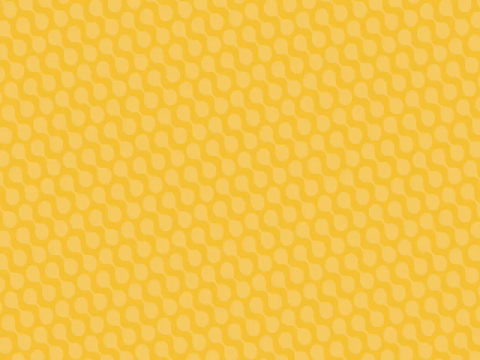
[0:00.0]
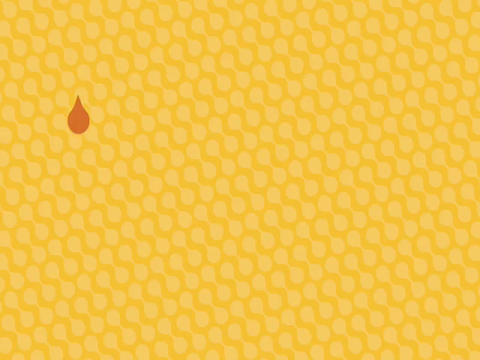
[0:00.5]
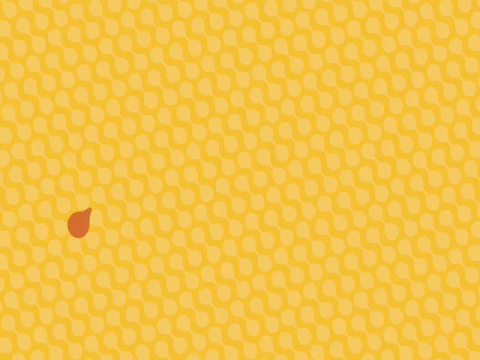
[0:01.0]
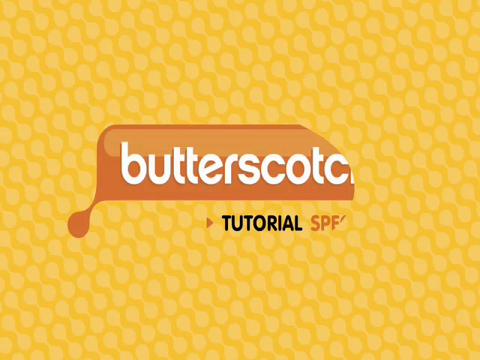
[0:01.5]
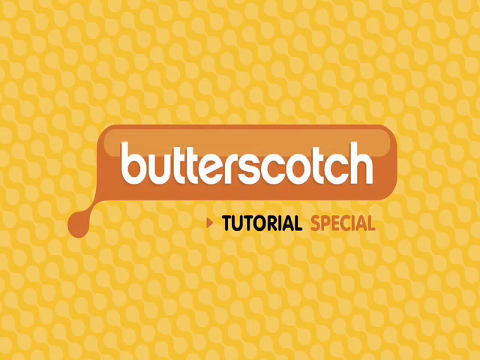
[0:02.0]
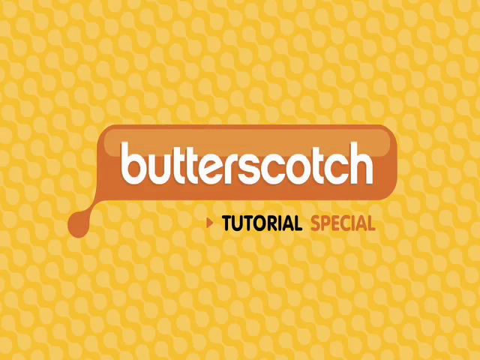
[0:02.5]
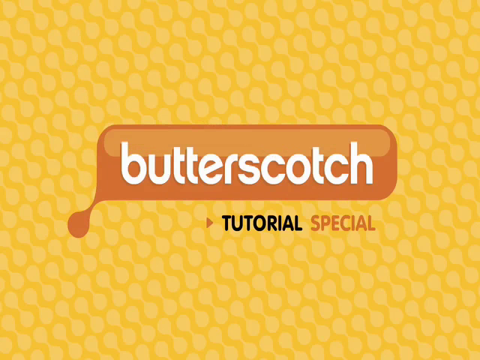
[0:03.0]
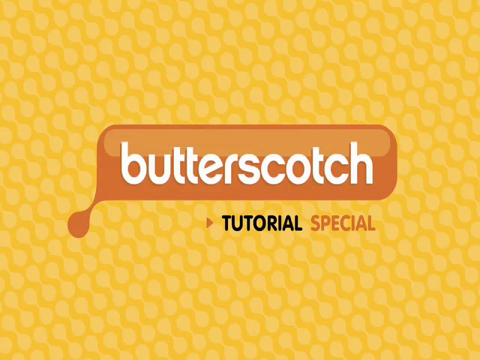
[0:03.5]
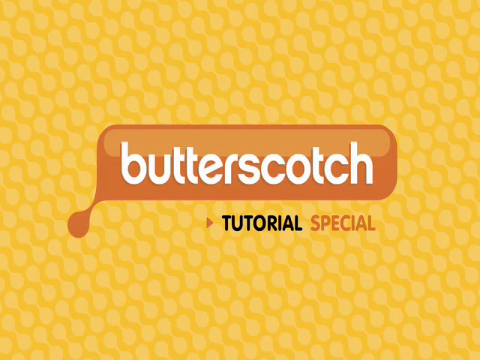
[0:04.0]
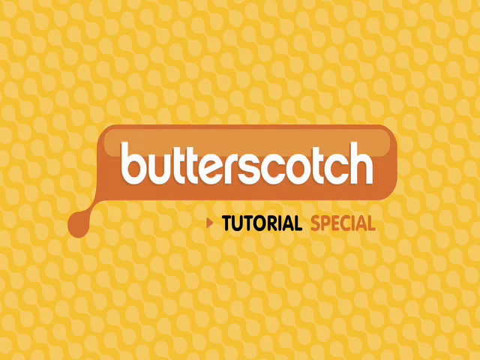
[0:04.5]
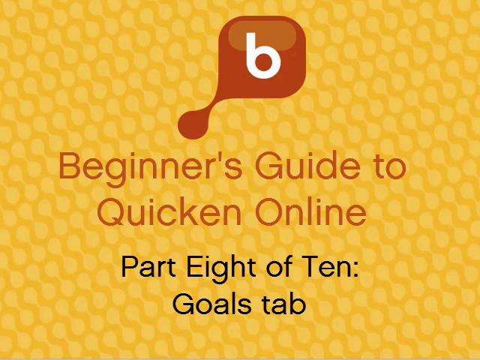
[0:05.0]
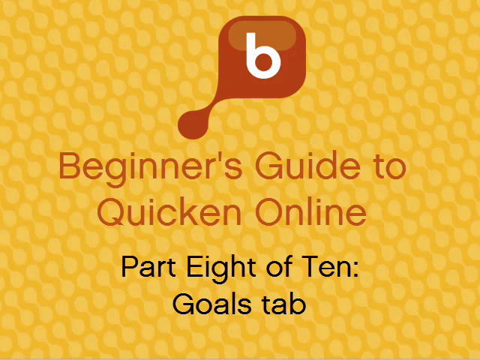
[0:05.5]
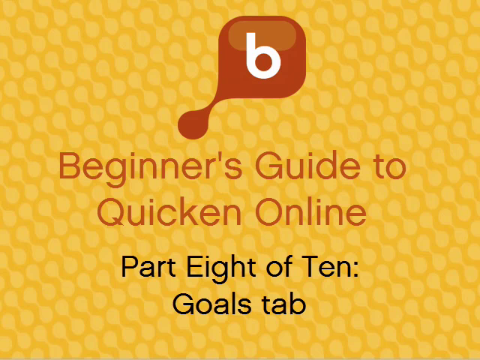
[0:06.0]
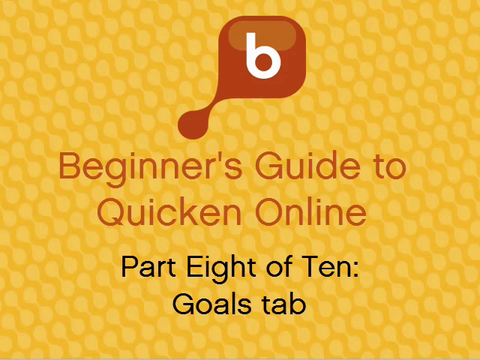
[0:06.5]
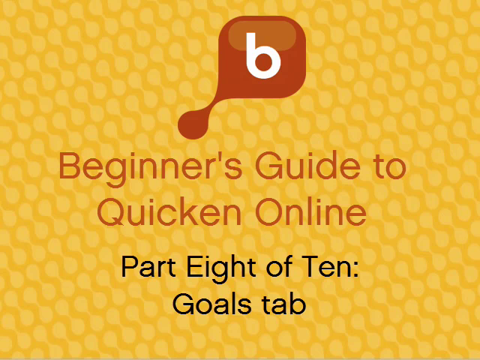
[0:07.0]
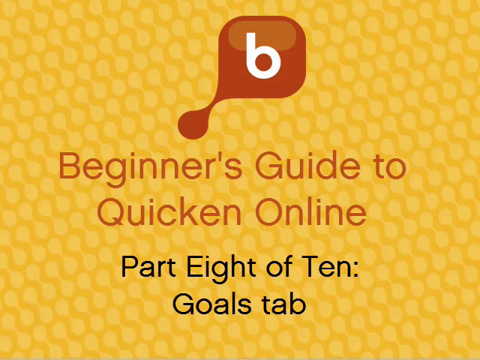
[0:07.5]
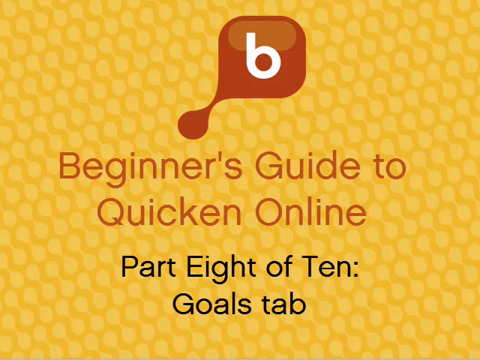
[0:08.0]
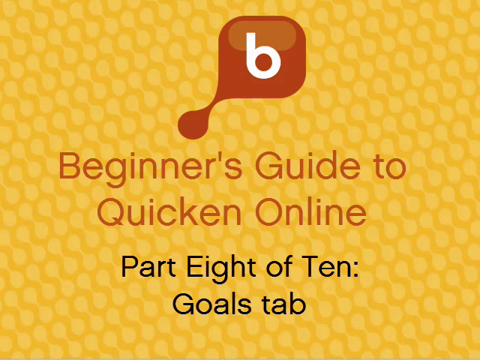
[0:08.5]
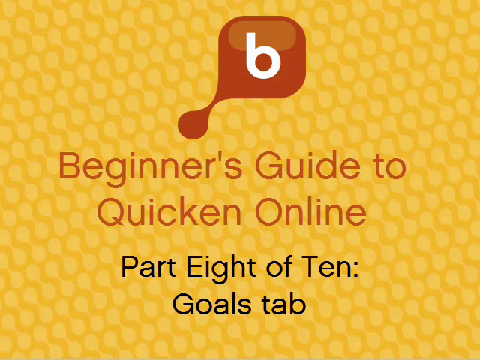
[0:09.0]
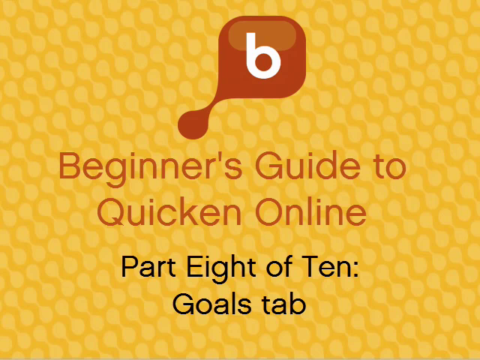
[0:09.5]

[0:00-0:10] The video opens on a gold design screen with a logo that says "butterscotch" in white text on a brown background, with "tutorial special" below it. Next, "beginner's guide to Quicken online" appears in brown text, and below it in black text is "part 8 of 10 goals tab". Above is a brown square with a lowercase "b". The left and right sides of the video are black from top to bottom. The gold background has a design of small white-ish circles placed side by side.